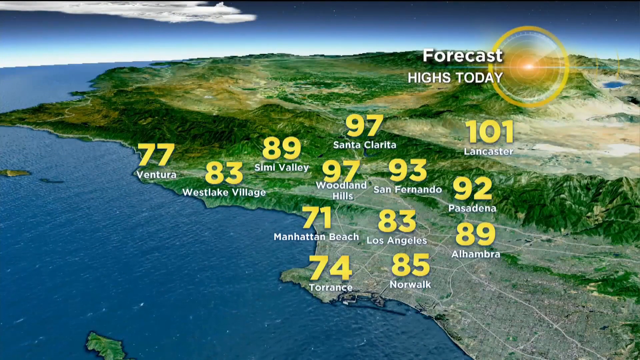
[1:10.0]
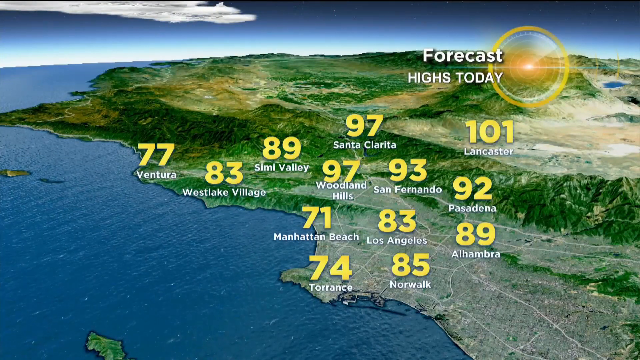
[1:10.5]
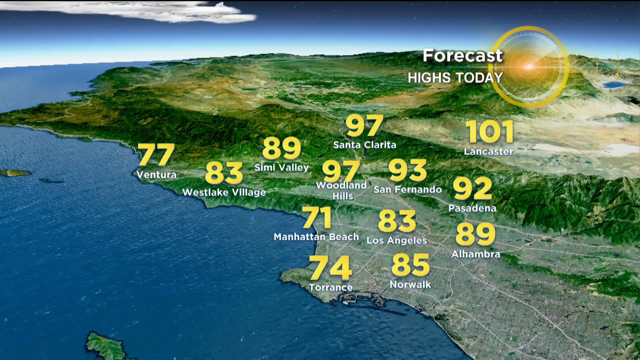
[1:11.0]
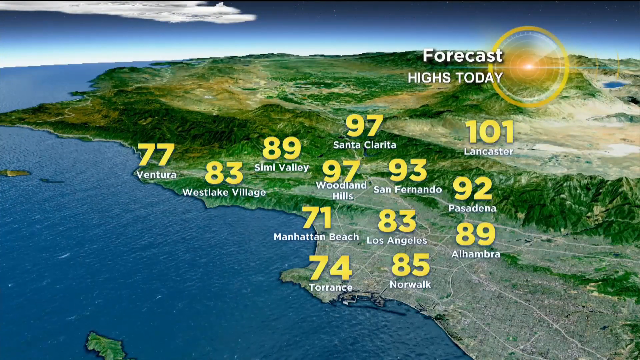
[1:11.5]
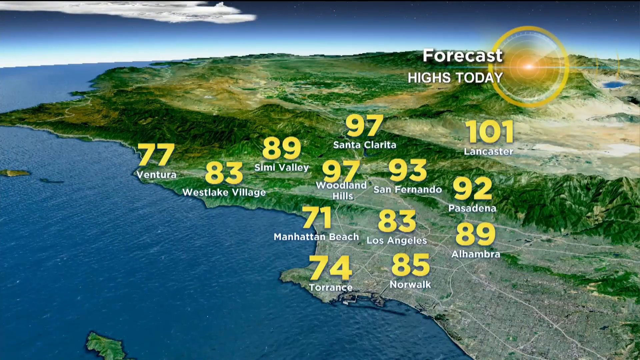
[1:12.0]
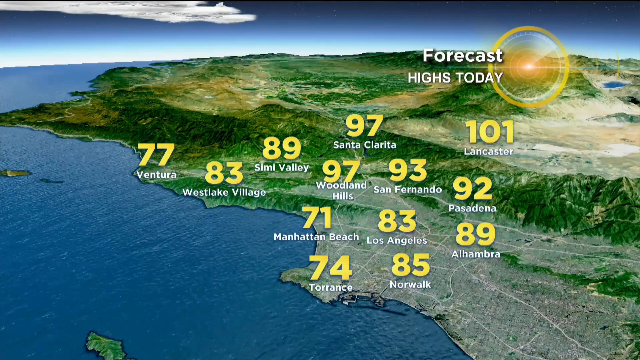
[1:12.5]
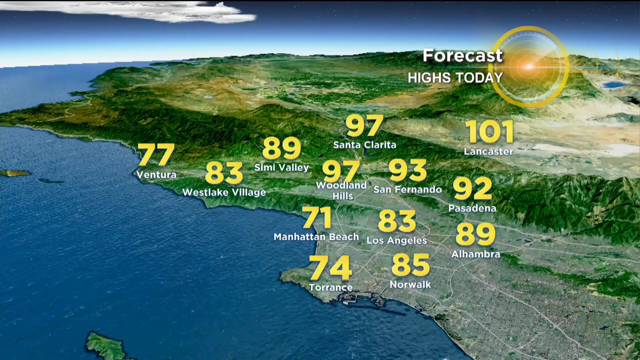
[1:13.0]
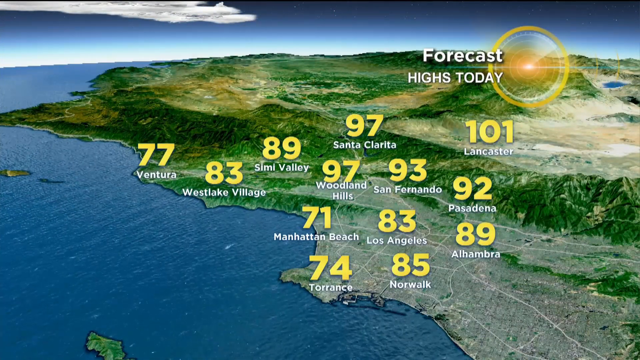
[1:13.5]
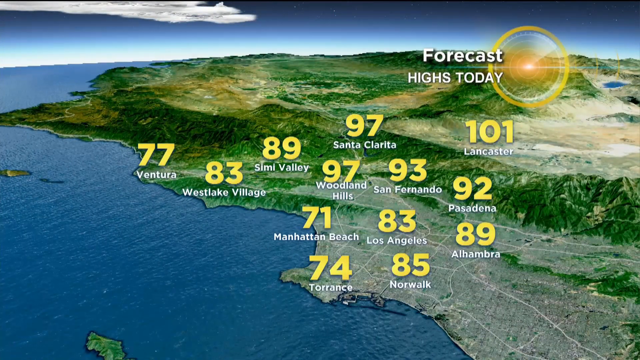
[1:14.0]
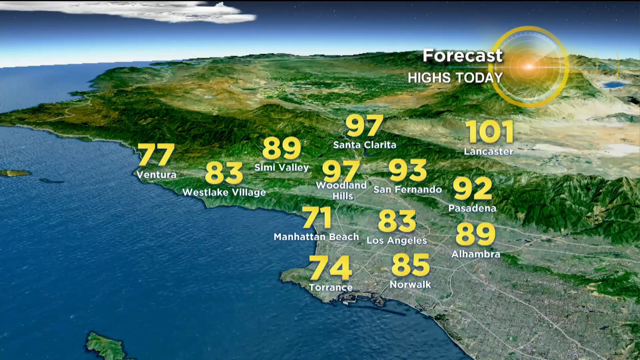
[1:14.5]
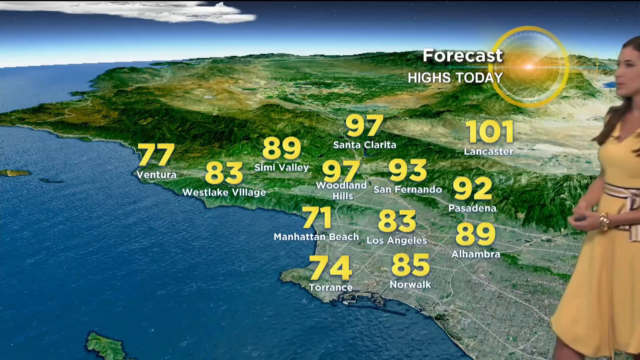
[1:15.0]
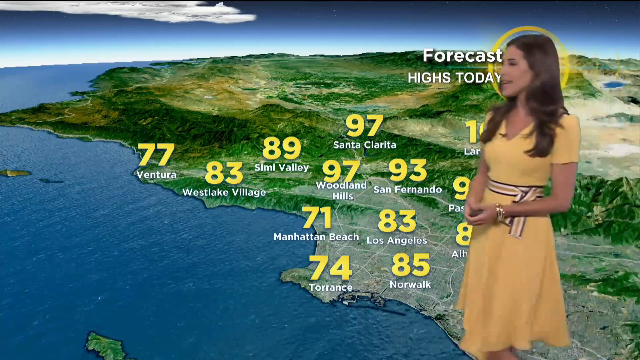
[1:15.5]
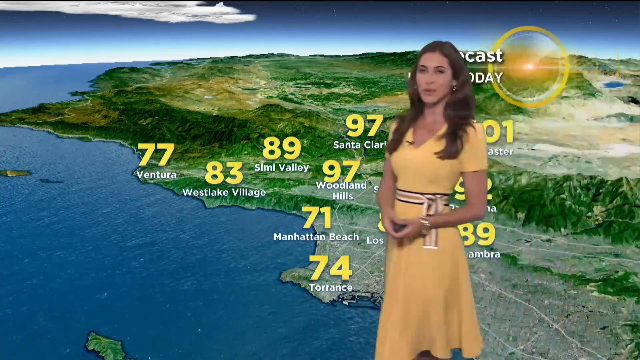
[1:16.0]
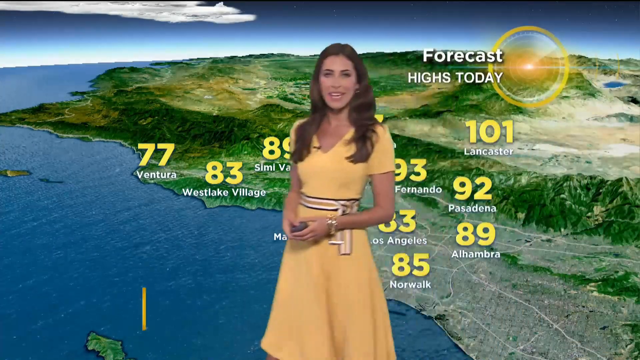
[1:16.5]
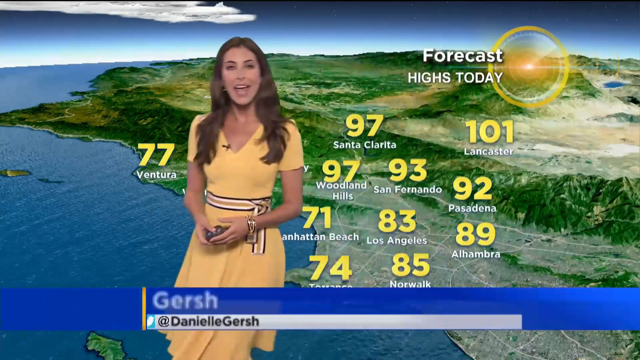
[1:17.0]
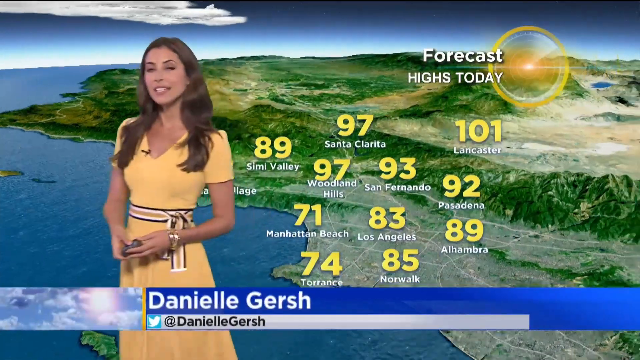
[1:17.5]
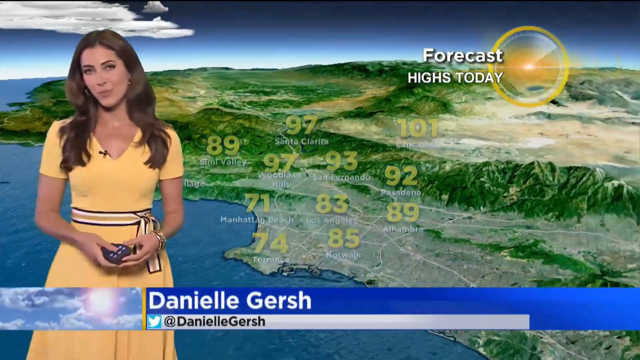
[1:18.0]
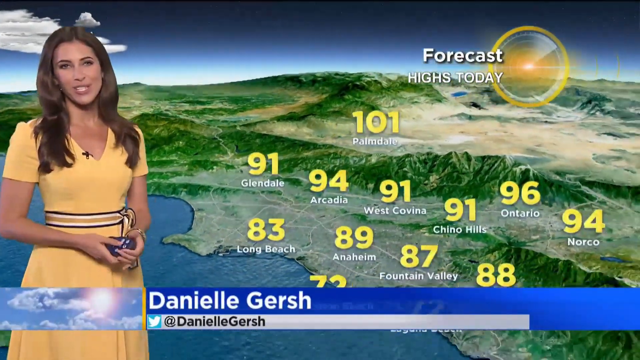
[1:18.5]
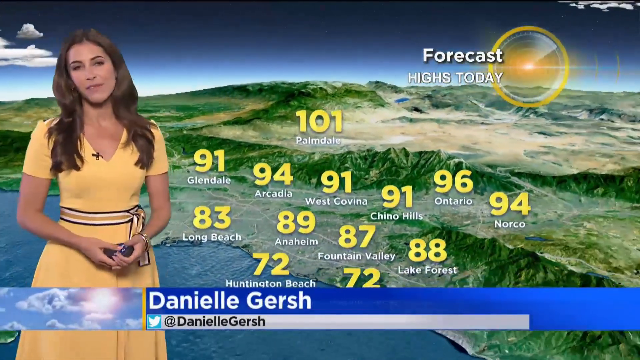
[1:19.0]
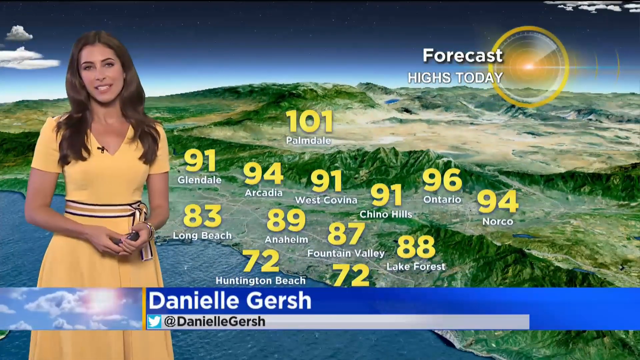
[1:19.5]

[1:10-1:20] A lady in a yellow golden dress, Danielle Gersh, shows the forecast, which looks like a sunny day ahead. The temperatures shown are 77 degrees in Ventura, 83 in Westlake Village, 89 in Simi Valley, 97 in Santa Clara, 93 in Woodlands Hills, 92 in San Fernando, 89 in Pasadena, 83 in Alabama, 71 in Los Angeles, 74 in Manhattan Beach, 85 in Torrance, and 101 in Lancaster. A clear view of water with mountains and a fjord is shown, with green pastures around.